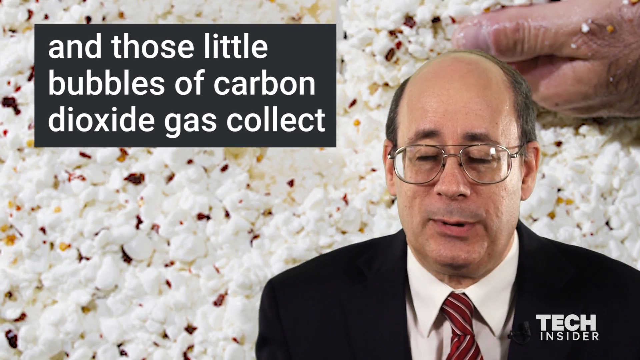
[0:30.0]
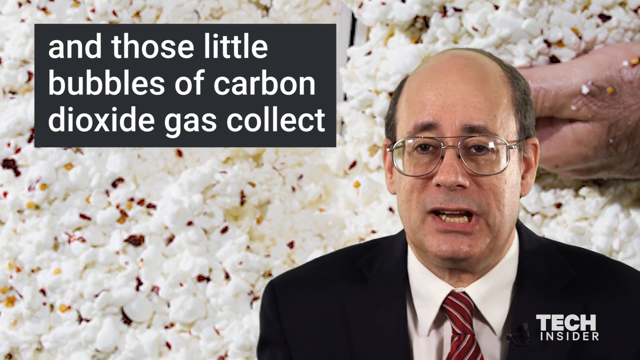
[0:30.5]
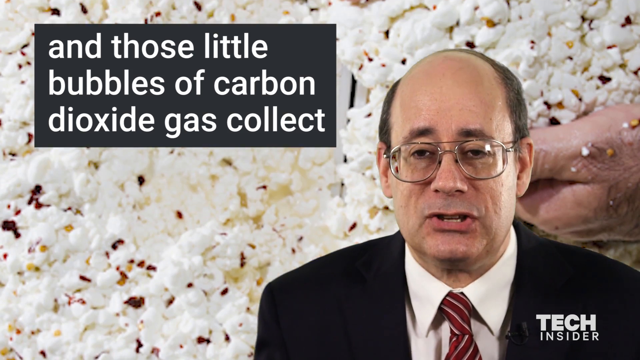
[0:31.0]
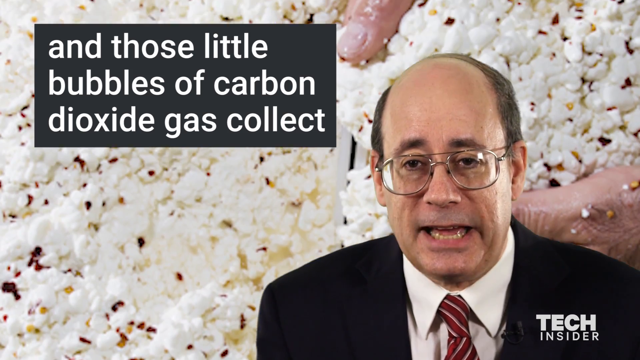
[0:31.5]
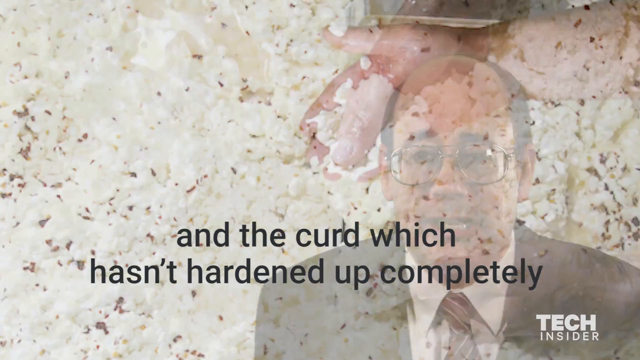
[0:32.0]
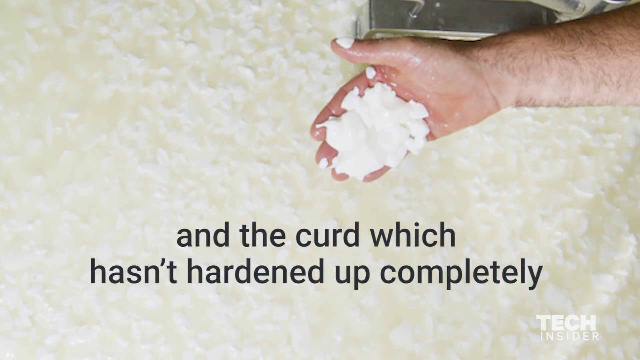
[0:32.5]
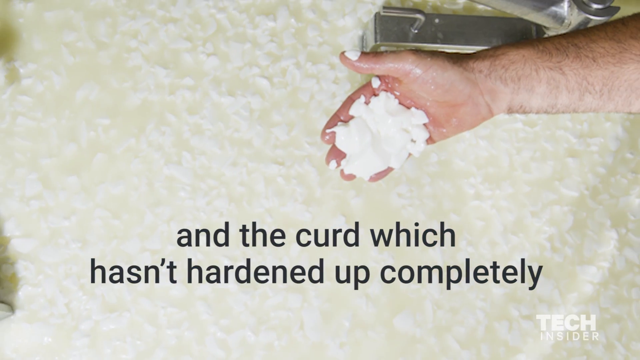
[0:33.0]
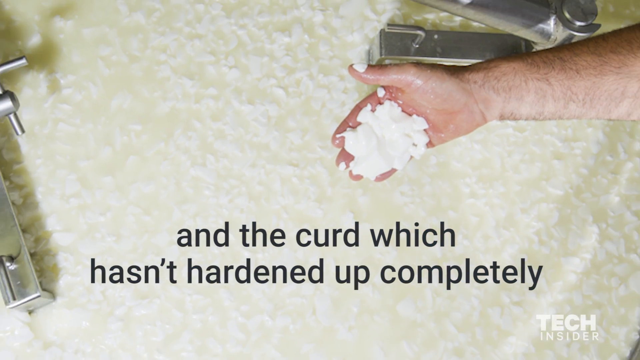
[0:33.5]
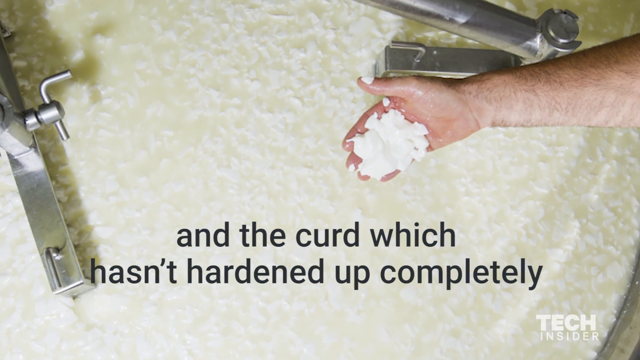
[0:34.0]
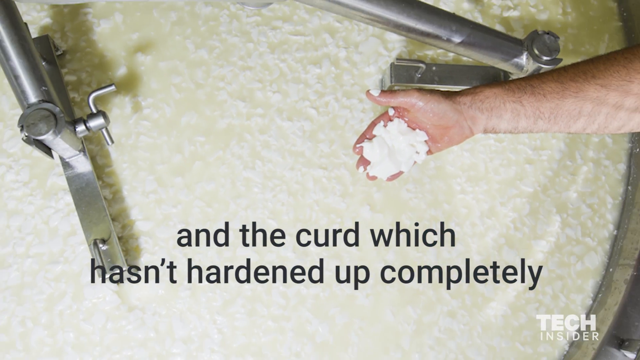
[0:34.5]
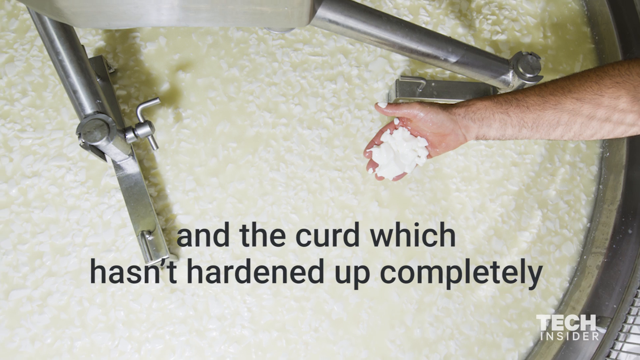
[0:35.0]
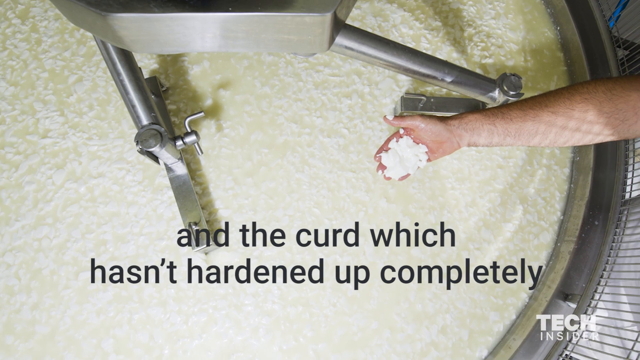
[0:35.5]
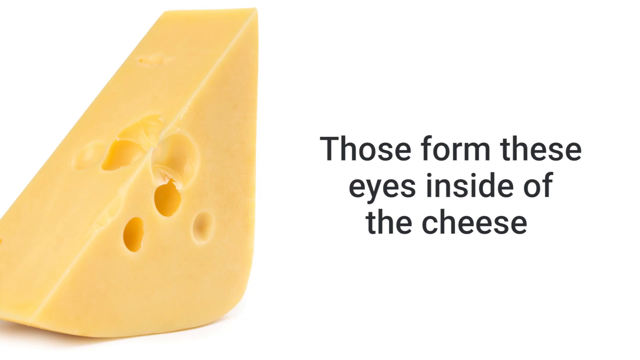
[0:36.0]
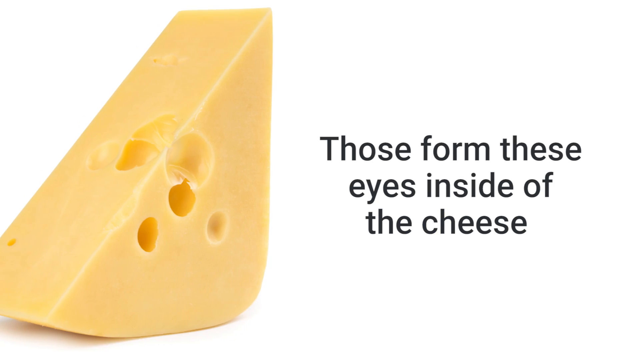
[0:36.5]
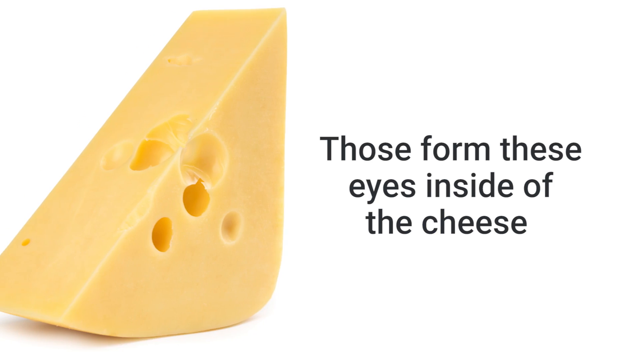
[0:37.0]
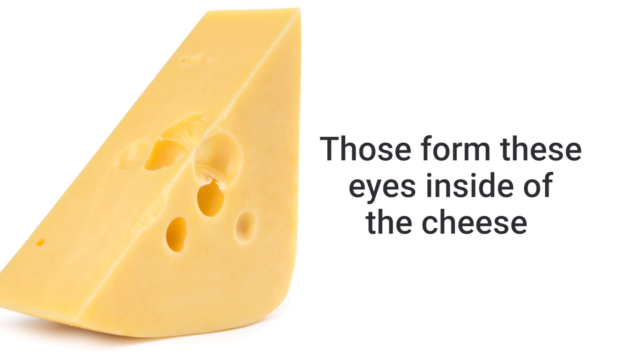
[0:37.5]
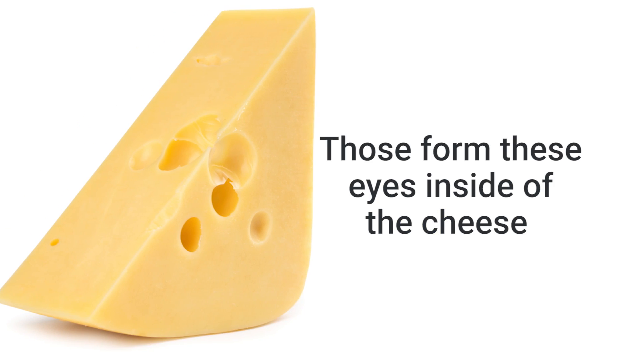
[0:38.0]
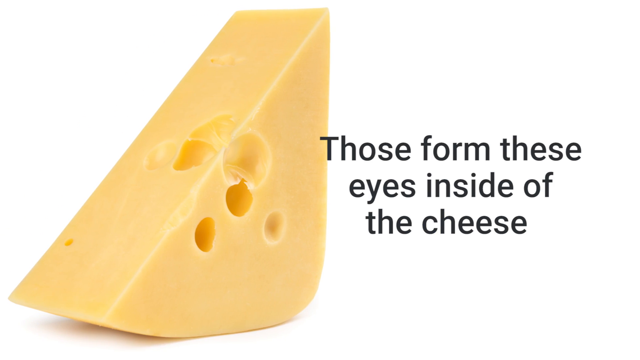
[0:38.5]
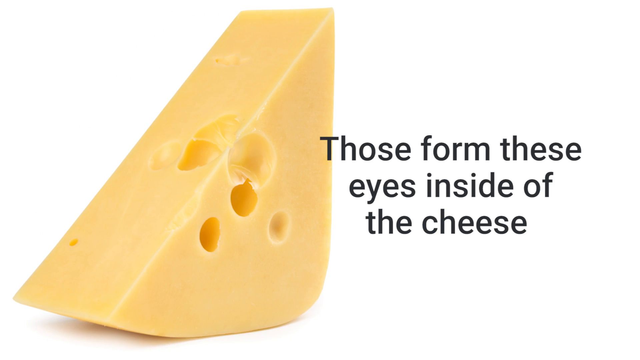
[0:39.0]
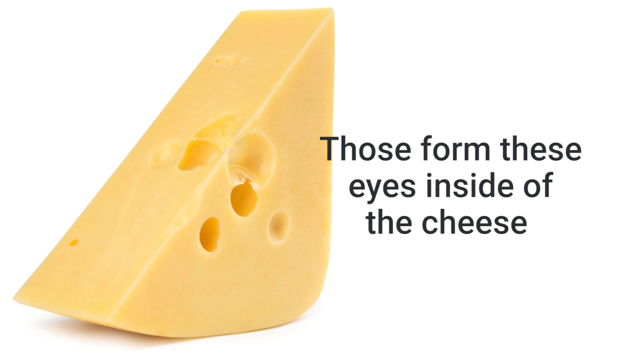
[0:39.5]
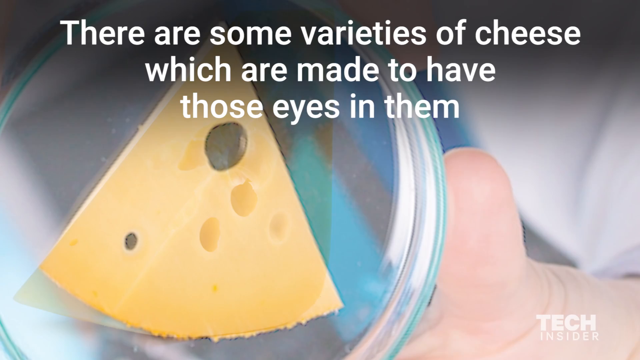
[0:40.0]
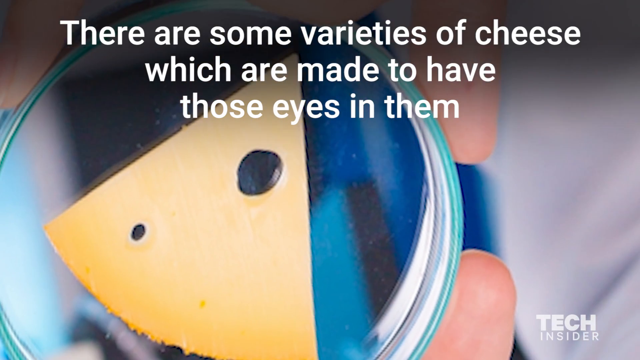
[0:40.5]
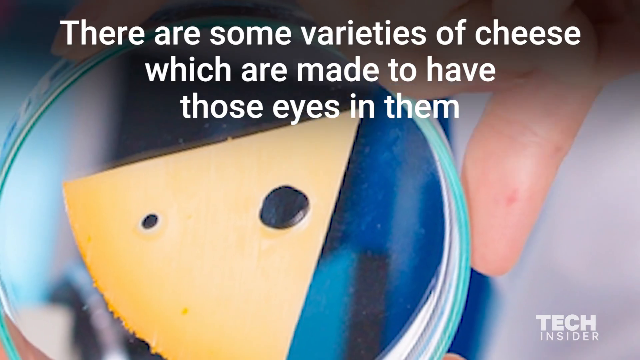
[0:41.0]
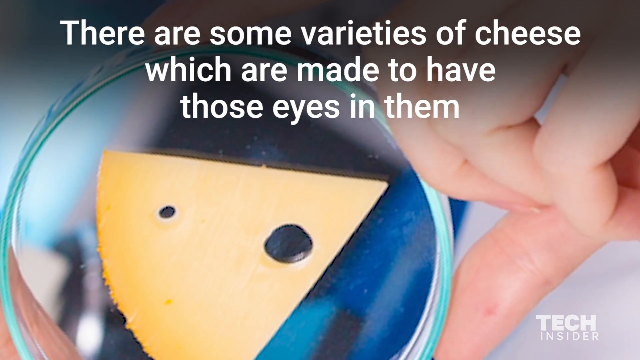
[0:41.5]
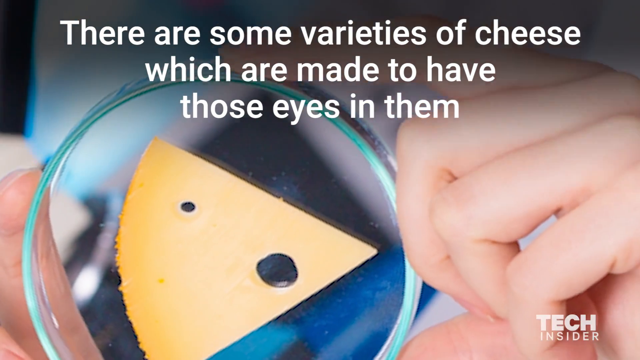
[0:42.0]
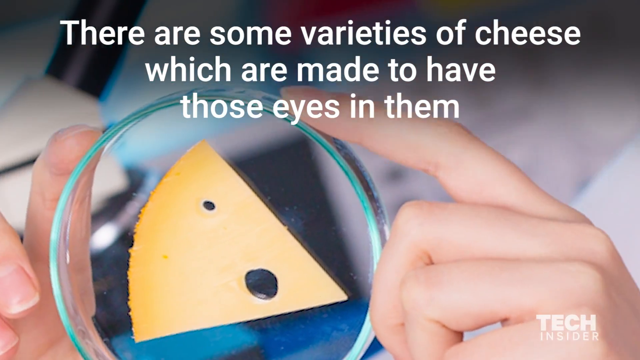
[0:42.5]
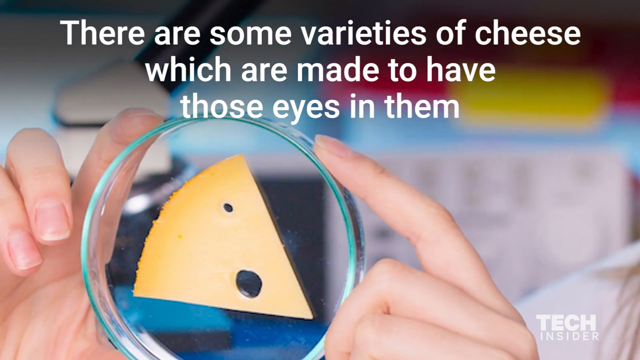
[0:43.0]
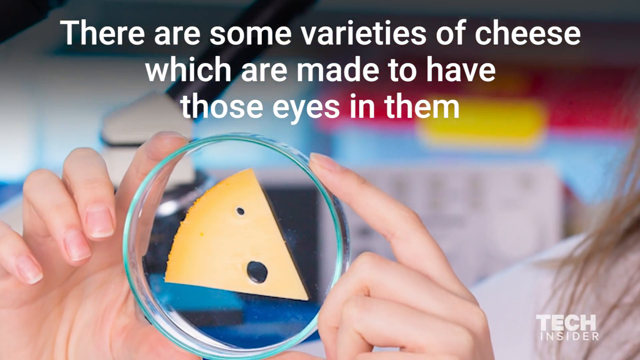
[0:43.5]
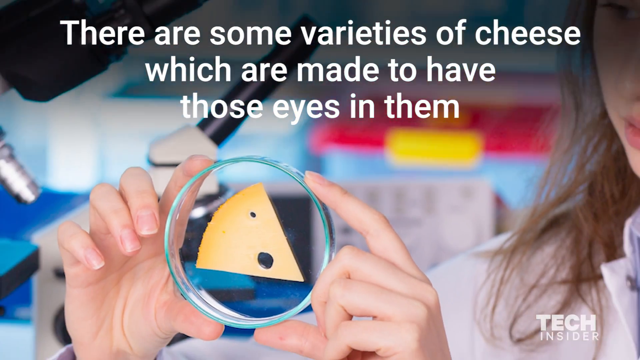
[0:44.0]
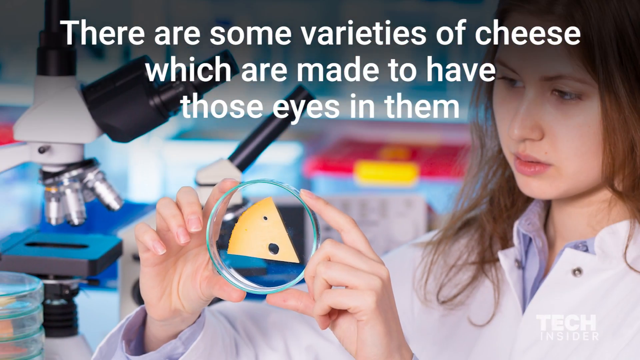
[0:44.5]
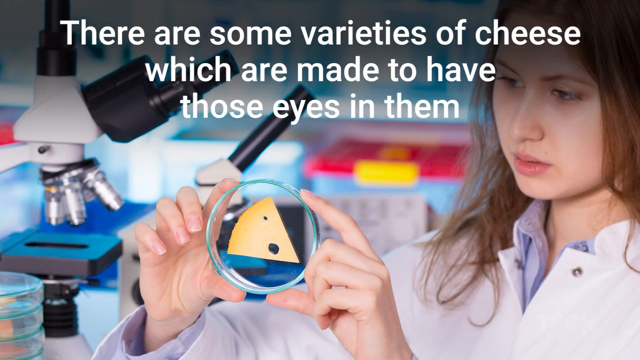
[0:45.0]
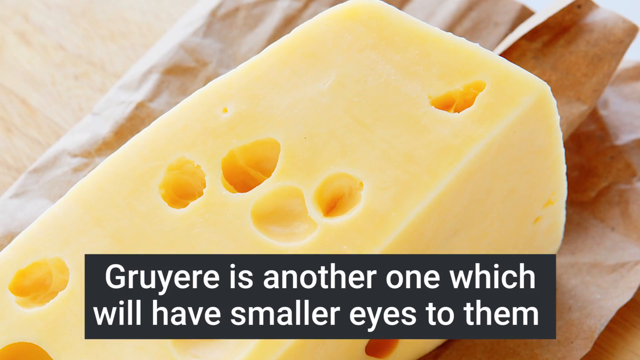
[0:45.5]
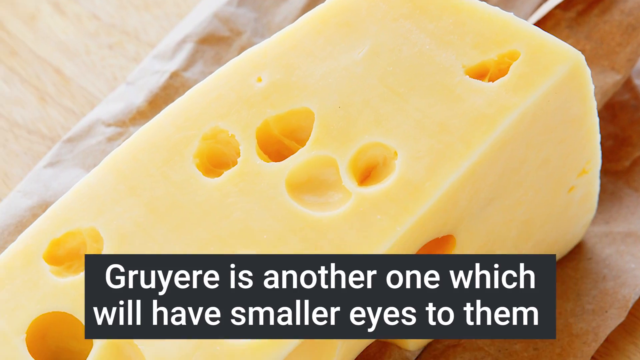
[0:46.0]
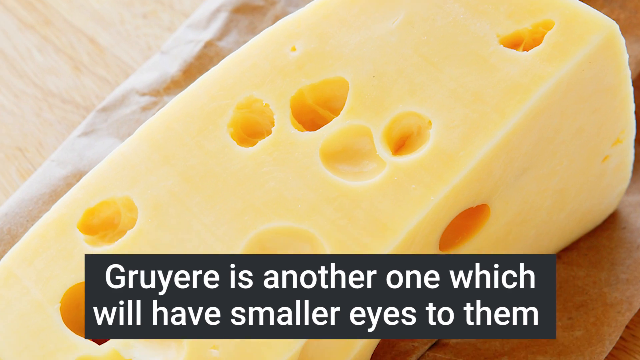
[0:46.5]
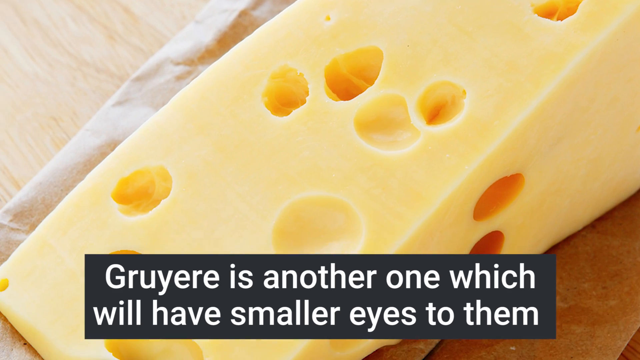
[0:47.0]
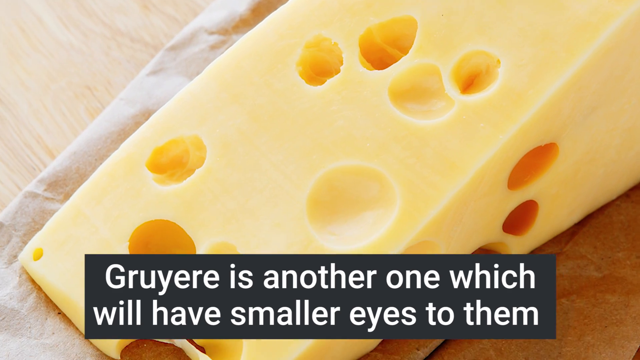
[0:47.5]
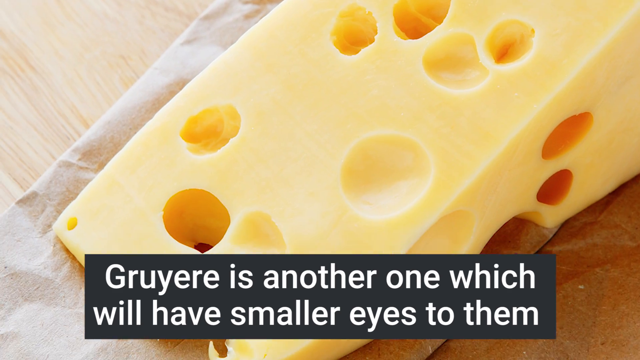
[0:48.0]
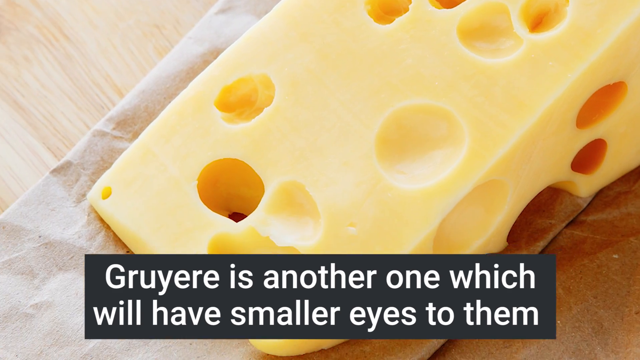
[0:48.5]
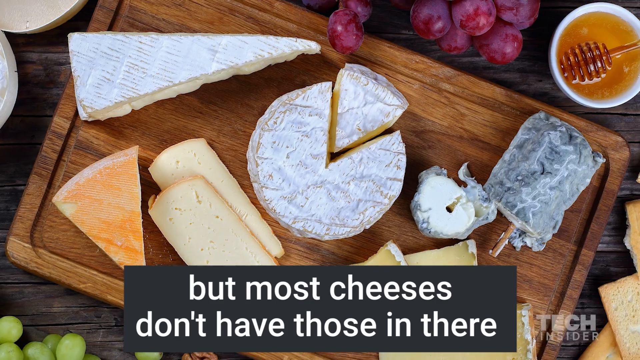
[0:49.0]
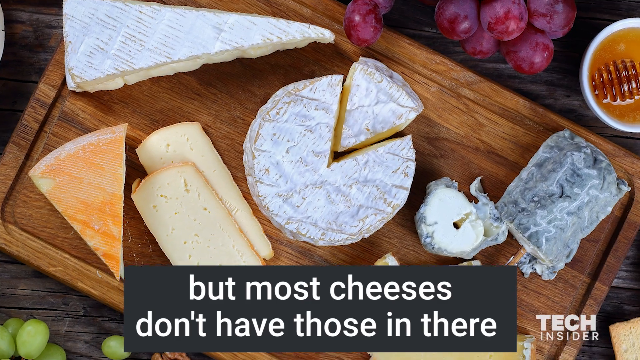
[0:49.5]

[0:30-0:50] A man dressed in a suit and tie and wearing glasses is speaking; he looks like a very smart man. Writing on the screen says: "carbon dioxide, and those little bubbles of carbon dioxide, gas collect, and the curd which hasn't hardened up completely. Those form these eyes inside of the cheese." A slice of cheese cut into a triangle shape is shown on a Petri dish, with two holes in the center. A man's hand has grabbed a bunch of curd from a very large batch of it. A large slice of cheese is on a cutting board, and then several other types of cheese appear, with slightly different colors and different shapes and sizes.